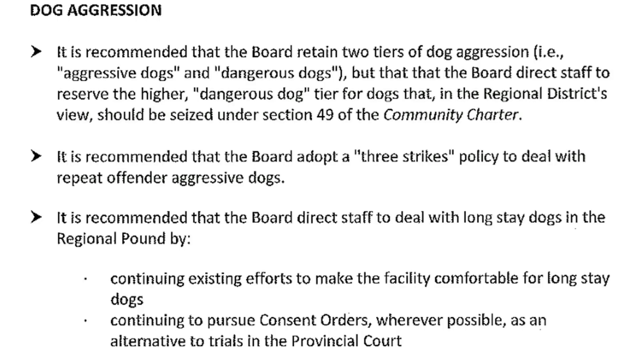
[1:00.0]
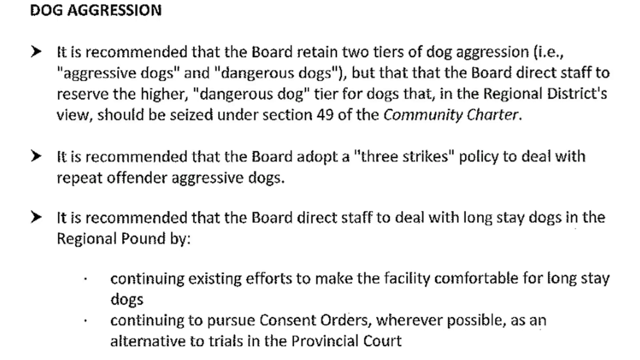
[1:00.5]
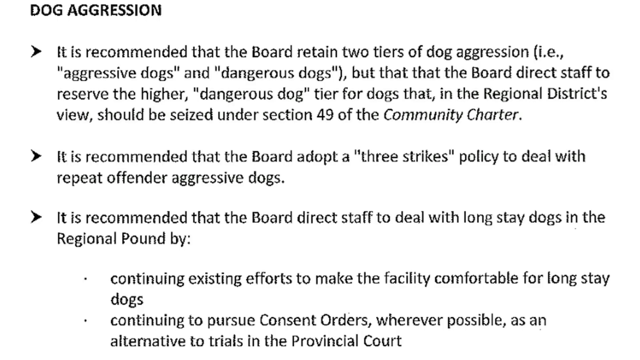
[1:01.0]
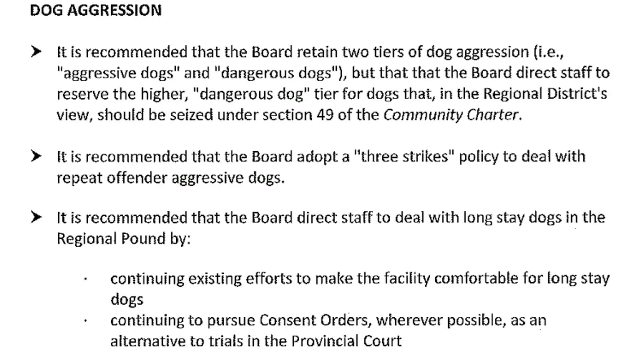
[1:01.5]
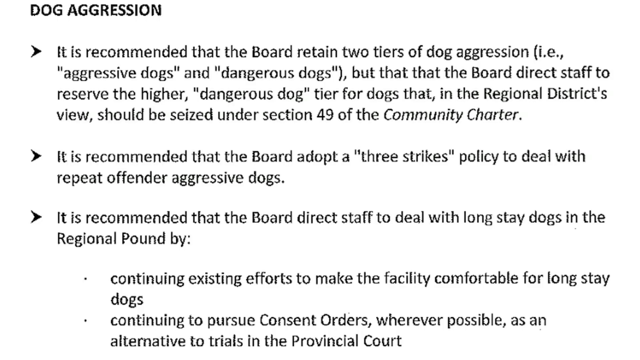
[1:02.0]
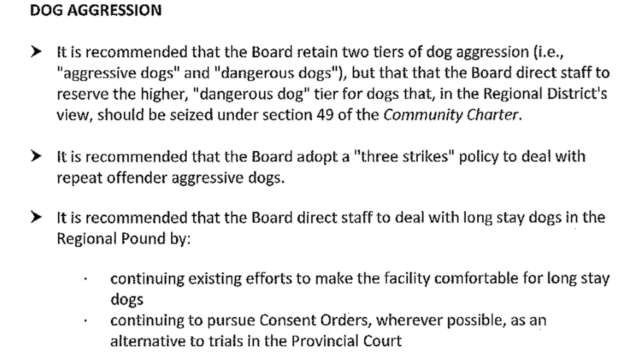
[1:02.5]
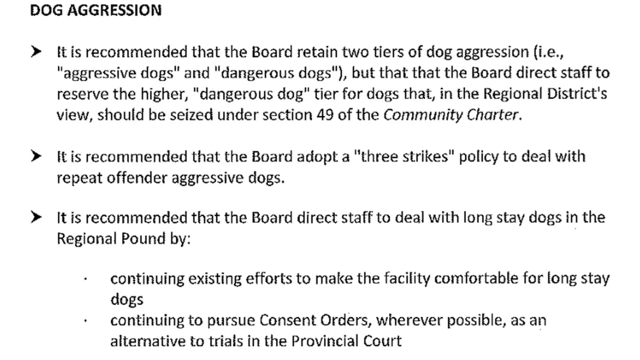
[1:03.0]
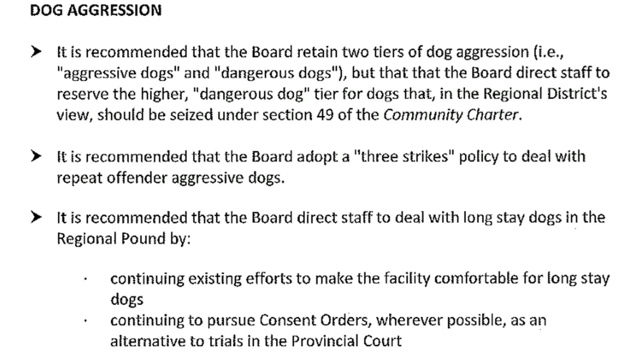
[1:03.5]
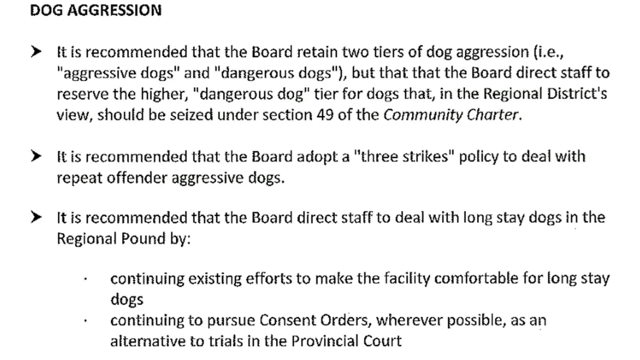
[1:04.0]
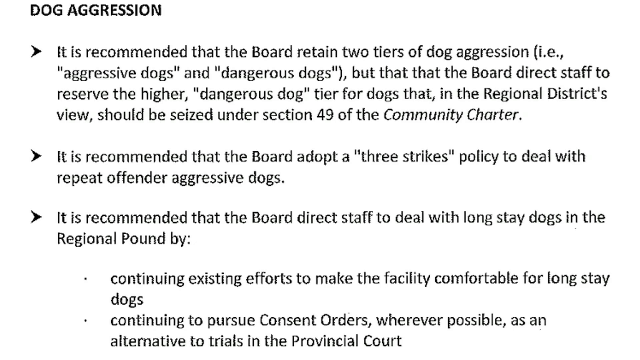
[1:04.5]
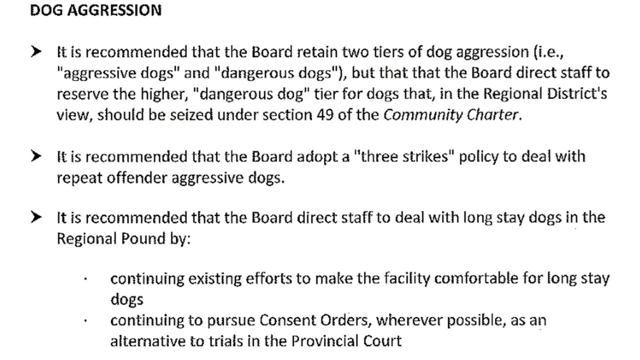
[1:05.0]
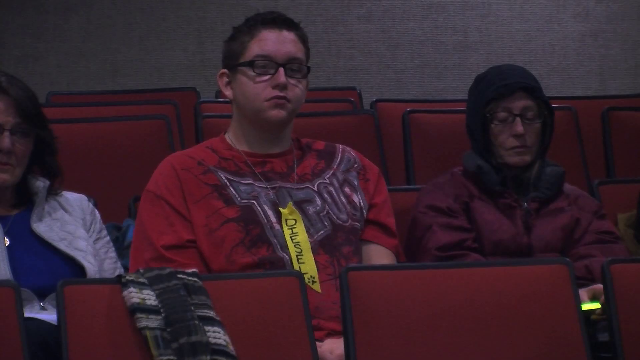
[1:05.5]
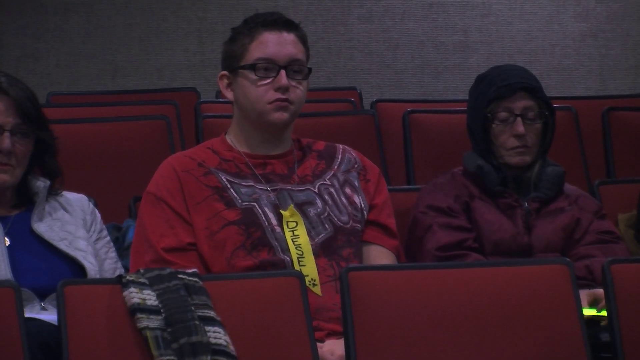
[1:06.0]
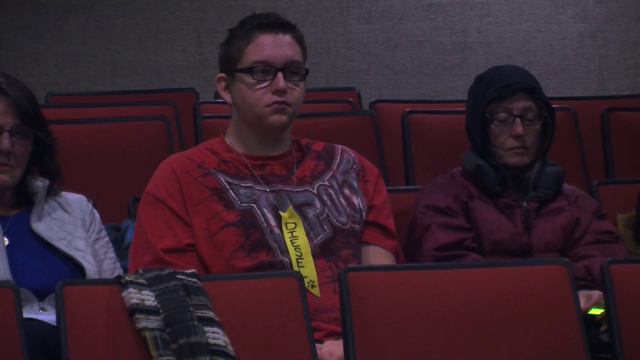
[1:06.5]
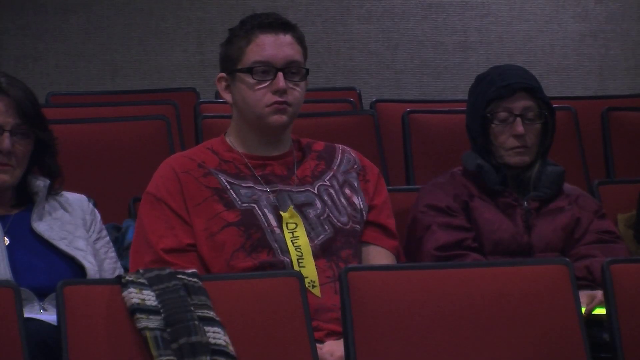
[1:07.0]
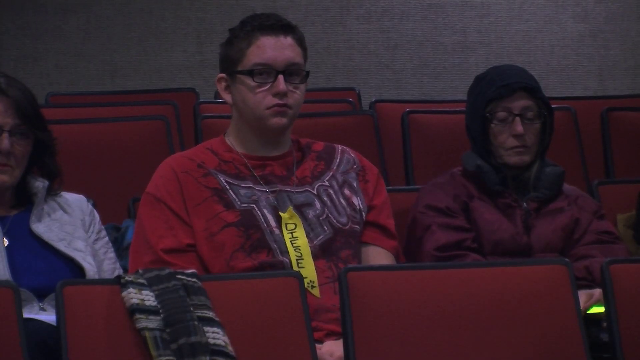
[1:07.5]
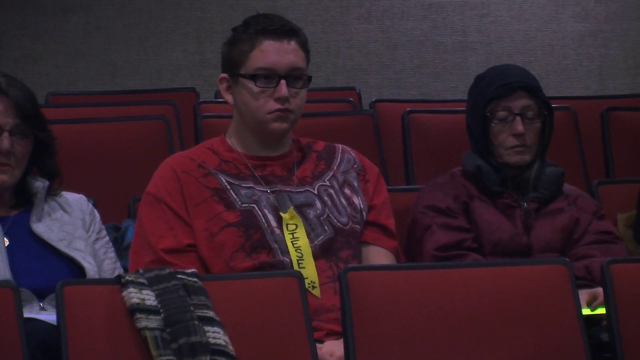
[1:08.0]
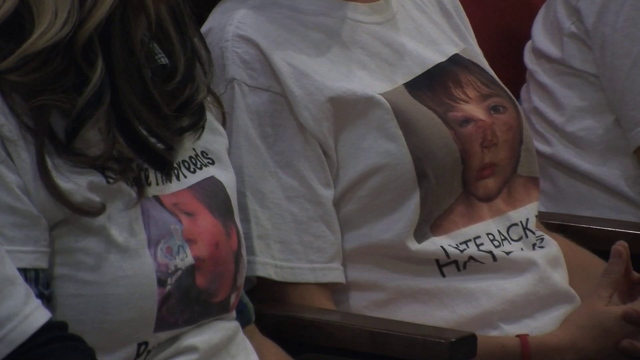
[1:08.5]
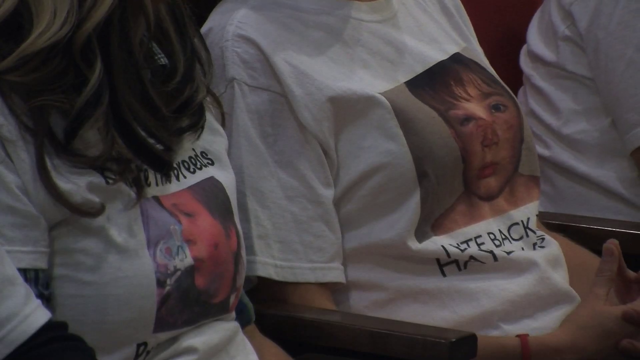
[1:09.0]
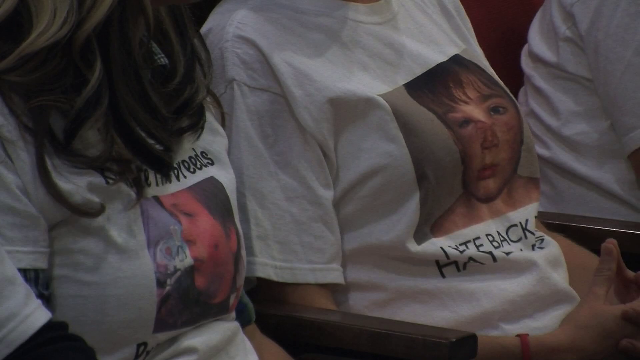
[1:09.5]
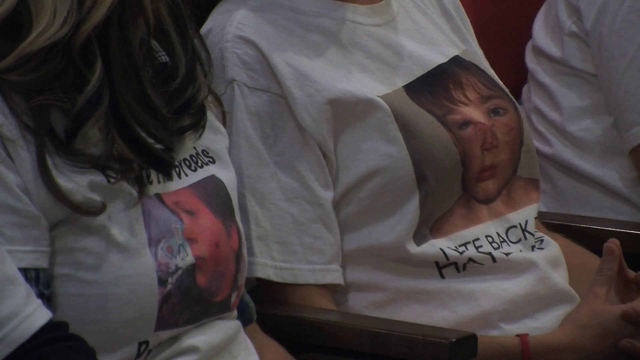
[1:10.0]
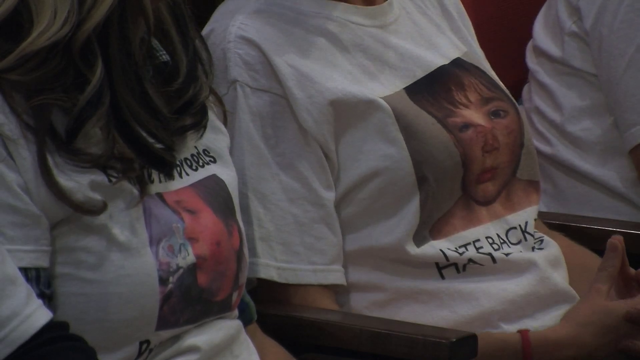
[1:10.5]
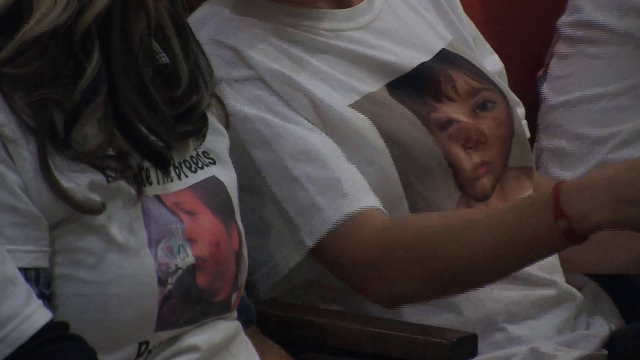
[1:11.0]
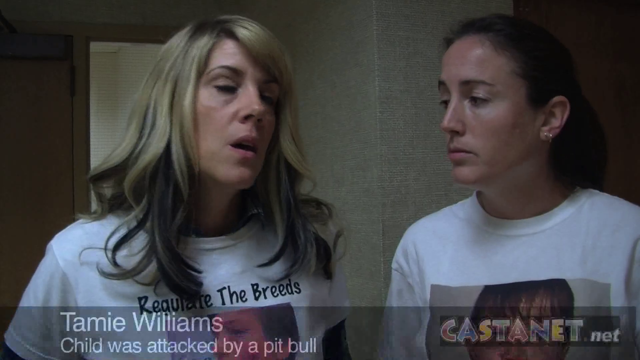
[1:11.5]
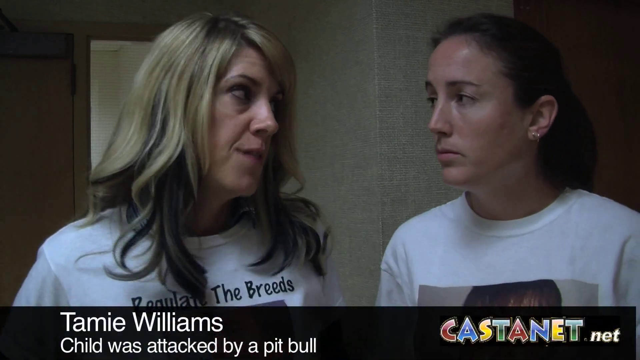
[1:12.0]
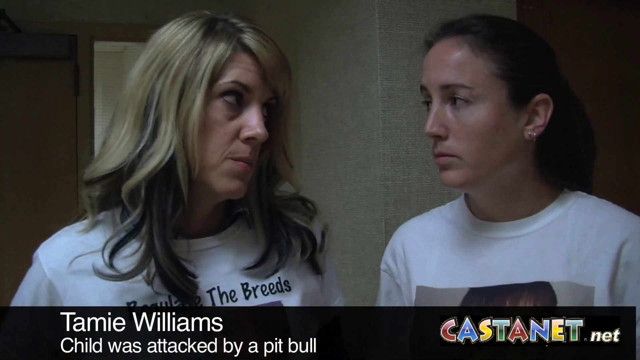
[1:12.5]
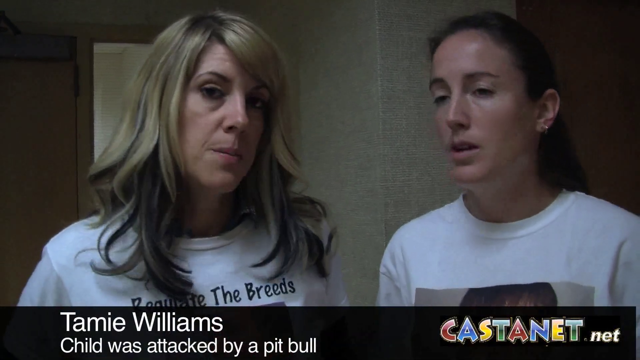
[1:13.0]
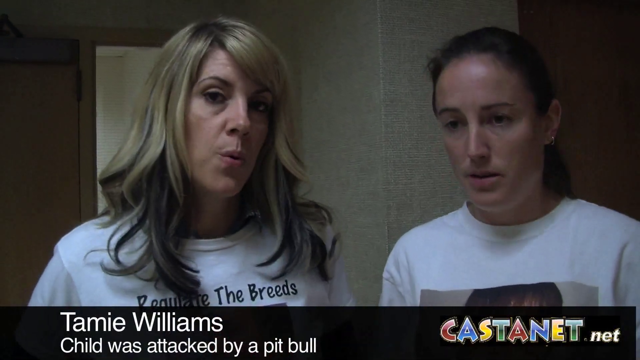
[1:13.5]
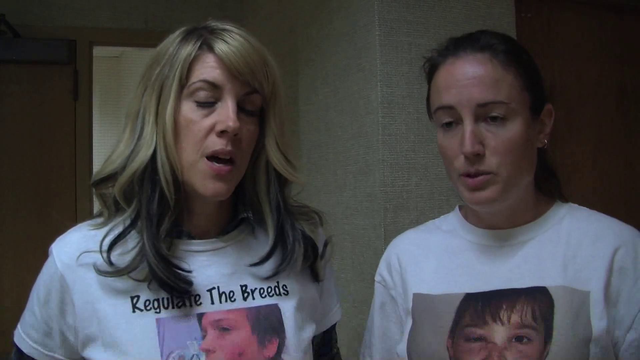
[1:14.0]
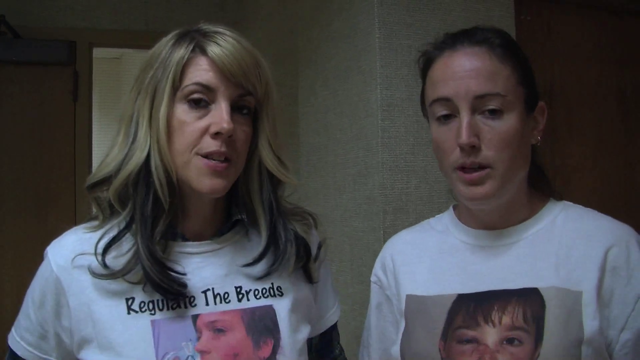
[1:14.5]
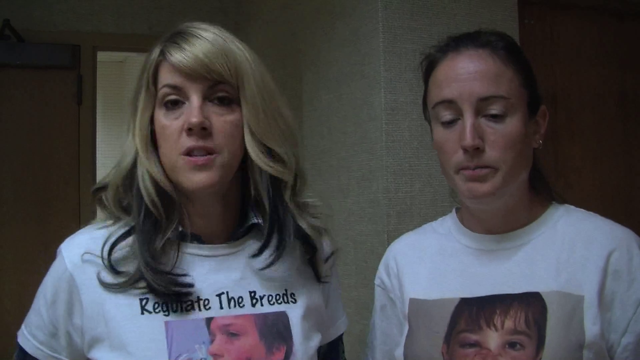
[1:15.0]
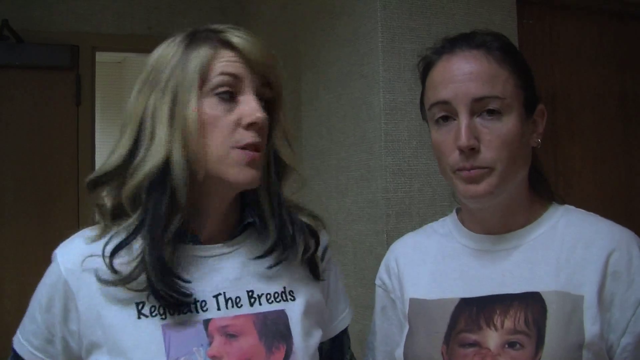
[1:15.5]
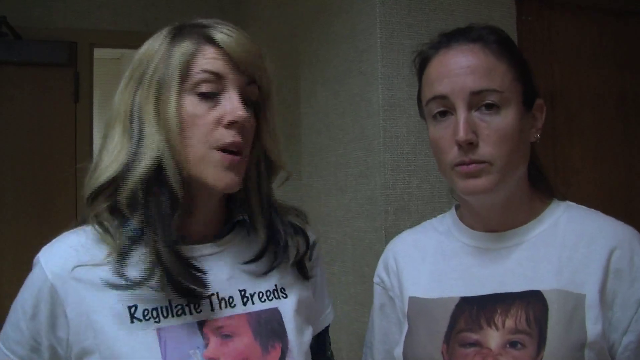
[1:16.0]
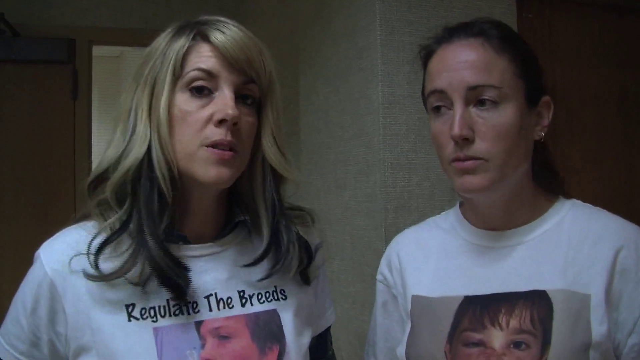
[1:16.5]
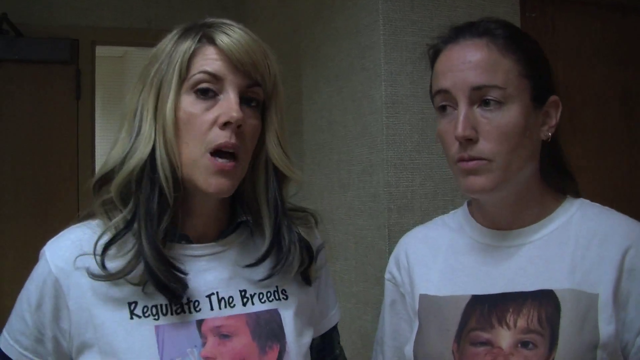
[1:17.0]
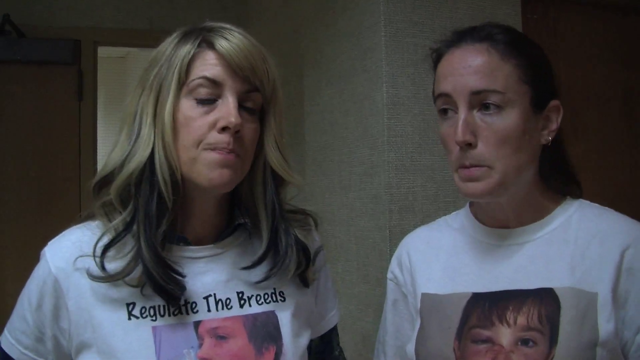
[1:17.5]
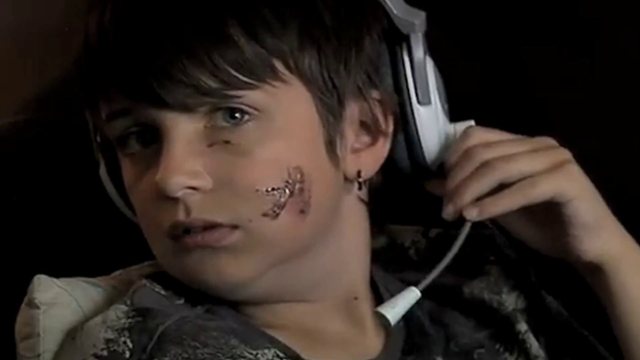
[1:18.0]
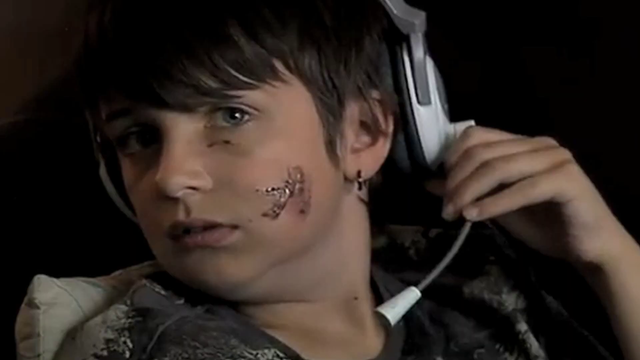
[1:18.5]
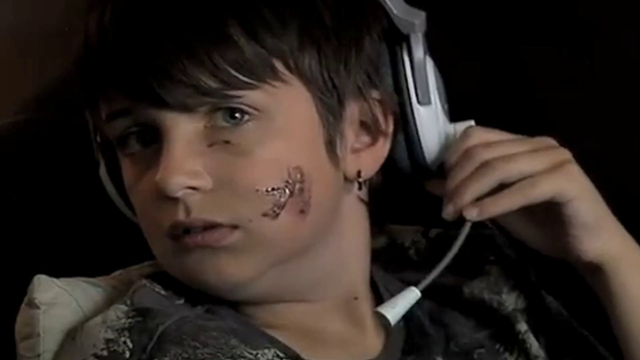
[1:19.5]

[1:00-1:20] The meeting appears to be about dog aggression and dangerous dogs causing harm to people in an area. A list of guidelines is shown, recommending that dangerous and aggressive dogs be allocated three strikes before serious measures are taken. Two women appear on screen being interviewed; both wear white shirts with a picture of a woman on them and the caption "regulate the breeds". The woman on the right has dark brown hair, while the woman on the left has long, light brown hair. Next comes a picture of a child with what looks to be dog bites on his cheek, apparently from a dog attack.